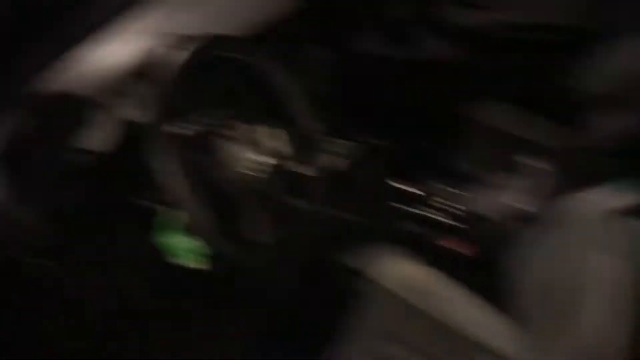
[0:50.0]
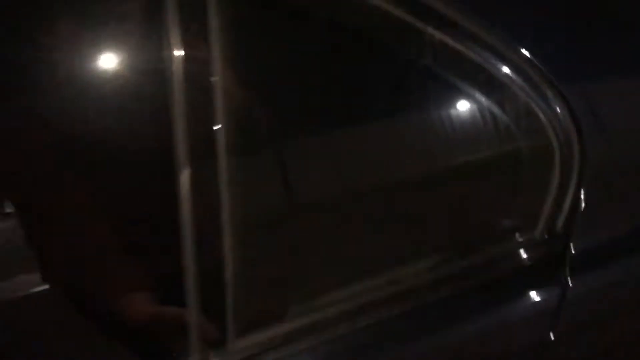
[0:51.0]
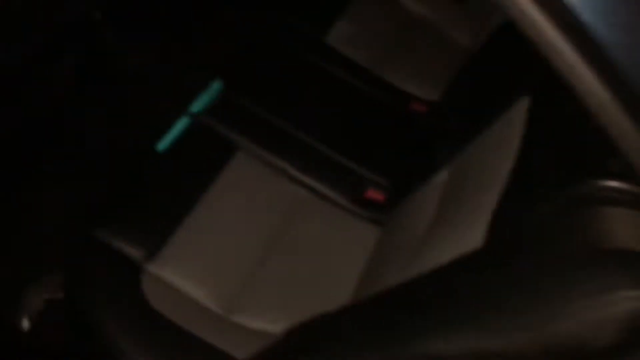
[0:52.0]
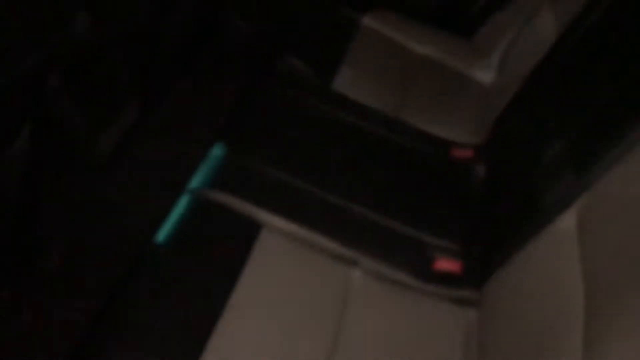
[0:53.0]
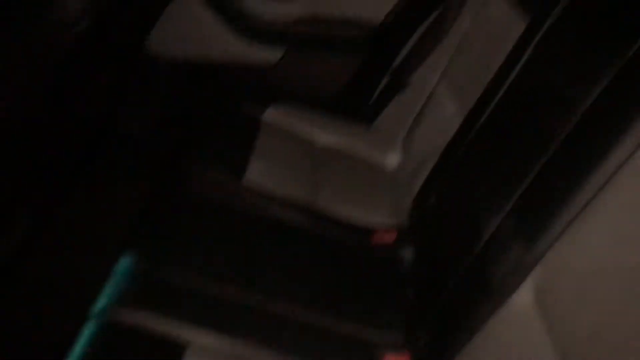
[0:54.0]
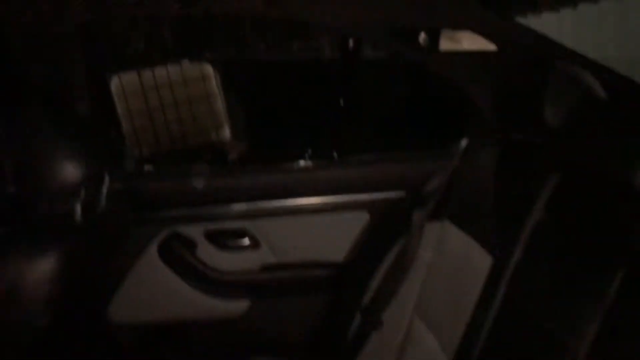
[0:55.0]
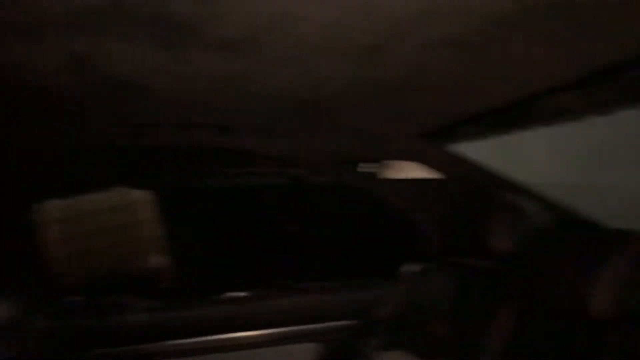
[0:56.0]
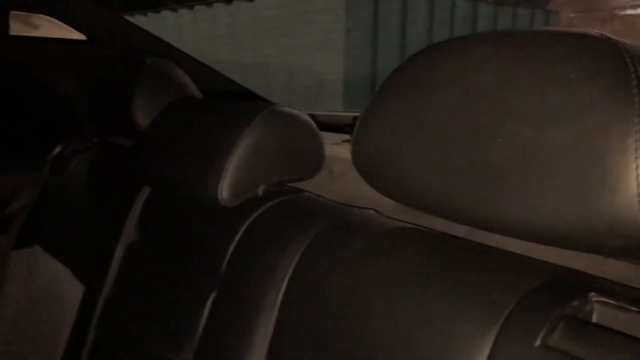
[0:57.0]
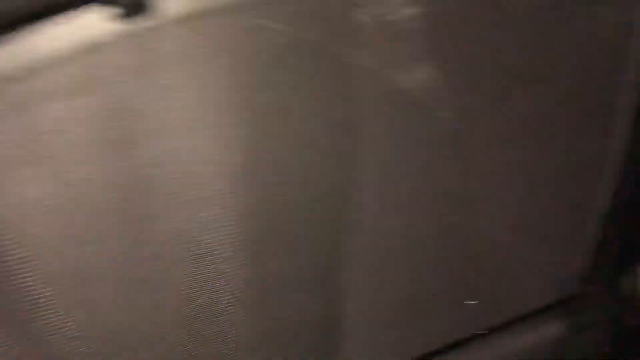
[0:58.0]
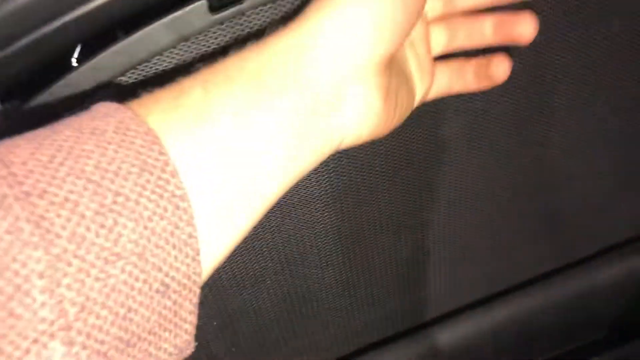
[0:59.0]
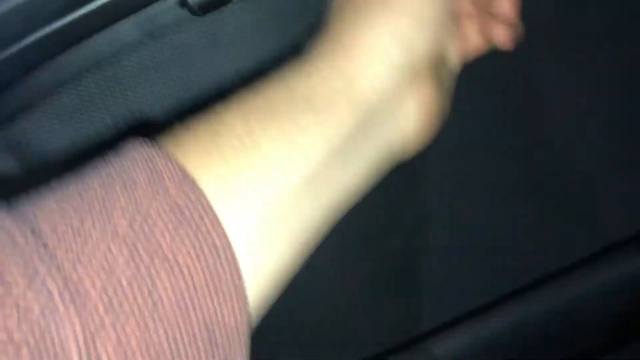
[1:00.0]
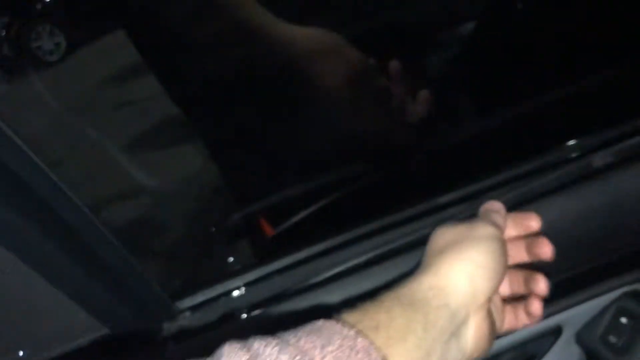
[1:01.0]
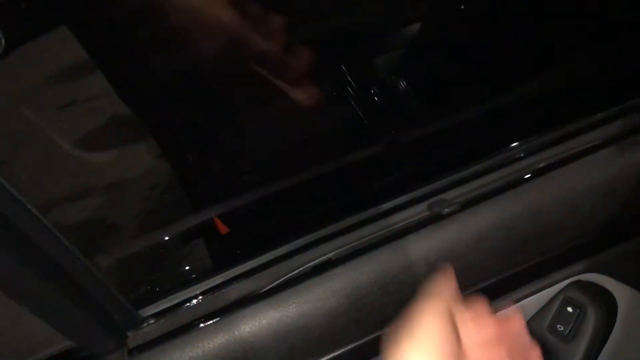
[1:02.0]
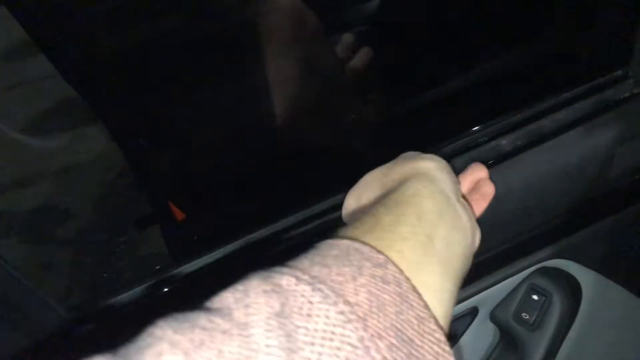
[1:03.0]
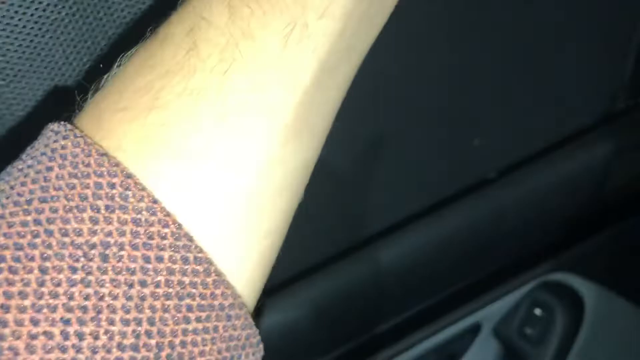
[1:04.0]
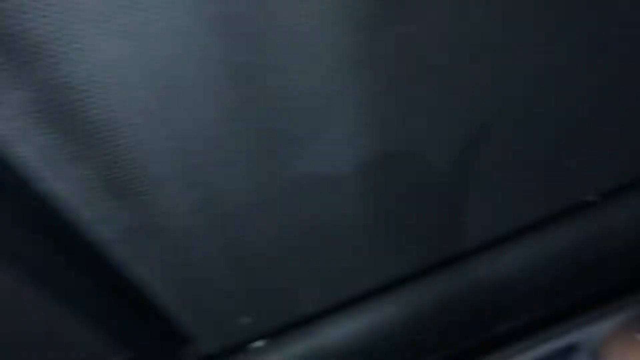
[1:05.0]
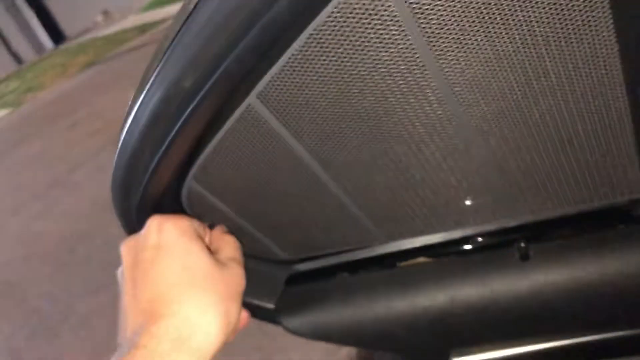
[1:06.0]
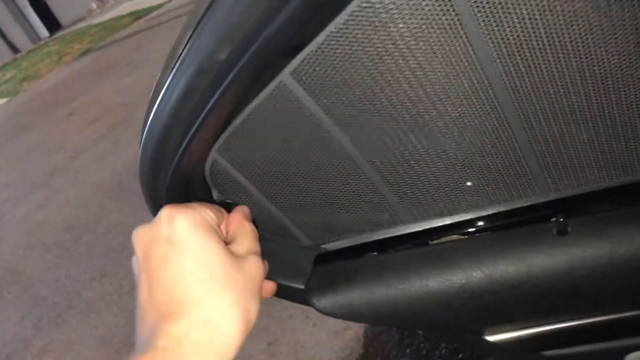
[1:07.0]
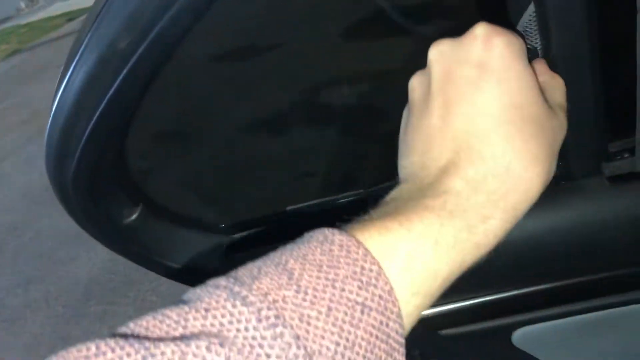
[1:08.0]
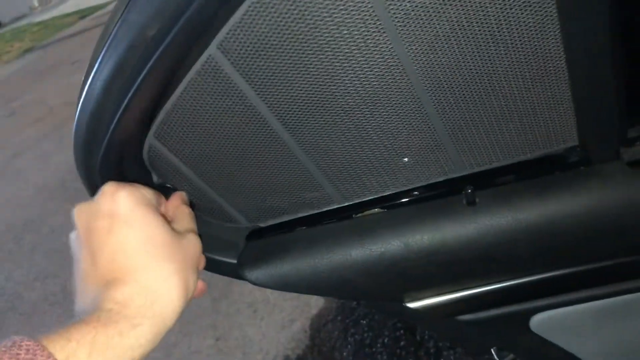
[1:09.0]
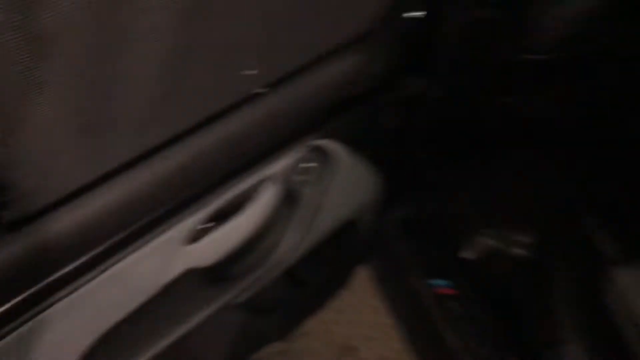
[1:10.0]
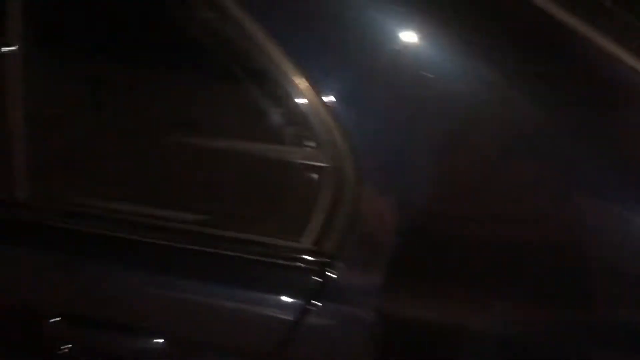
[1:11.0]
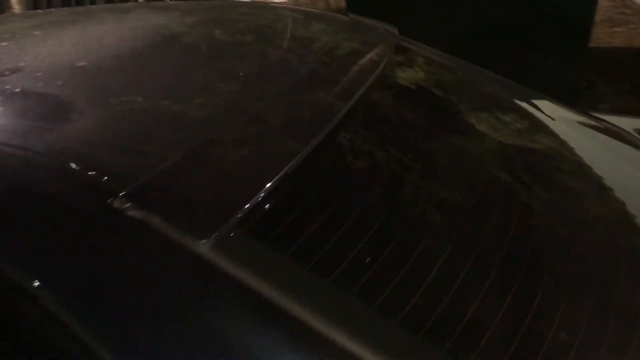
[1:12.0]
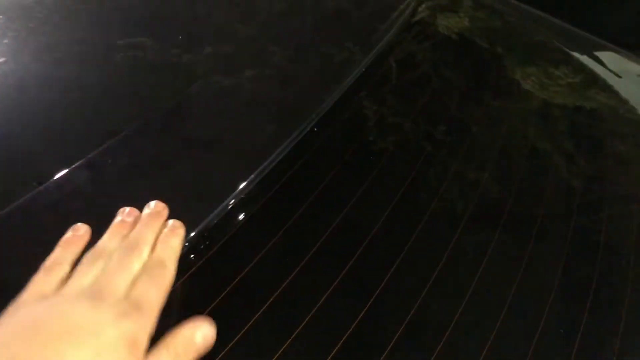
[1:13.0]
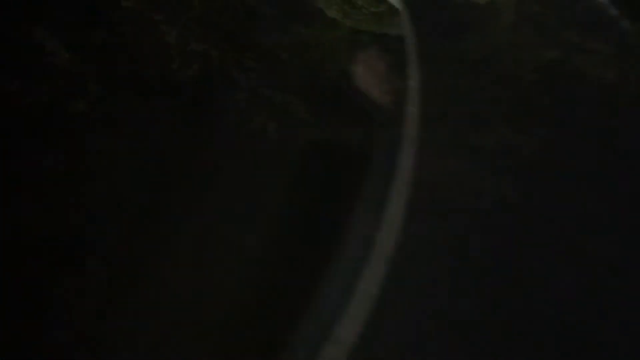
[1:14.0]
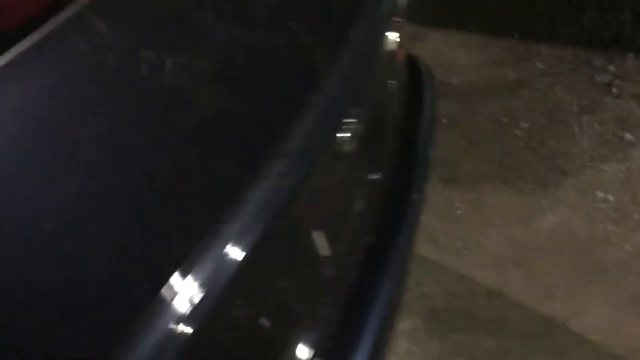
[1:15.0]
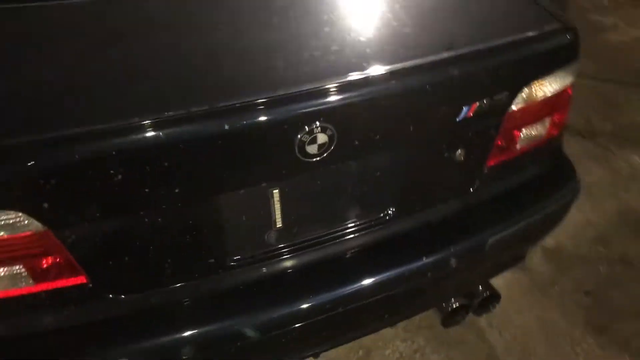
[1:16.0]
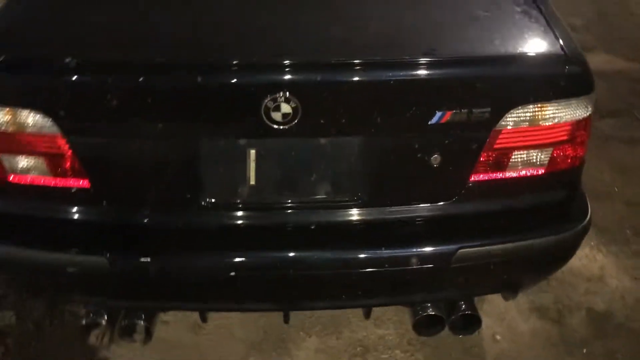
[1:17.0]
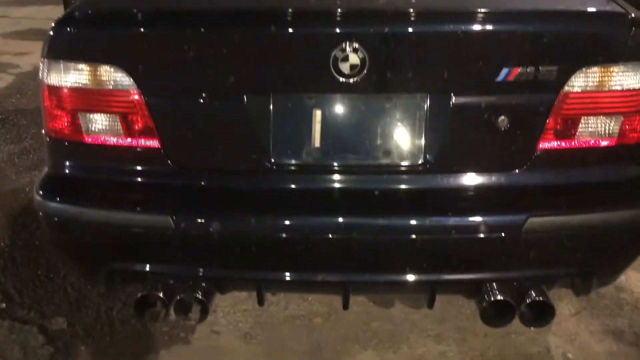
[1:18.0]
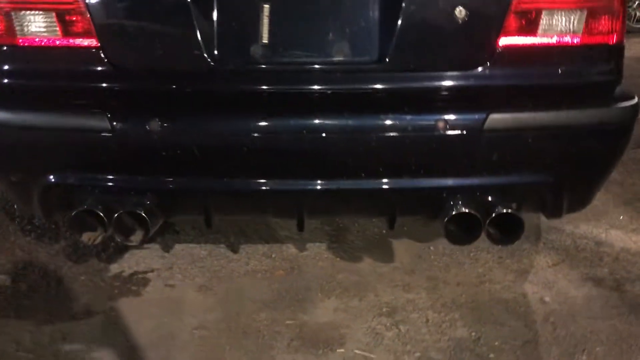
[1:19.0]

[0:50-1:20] The rear passenger door behind the driver's side is opened, revealing a two-tone rear seat with three seats in the rear. A sunshade made of black net is open; the person pulls it out and drops it on the ground. The small glass also has a sunshade, and the person shows its mechanism. A rear spoiler is mounted above the rear windscreen, and there is a small spoiler on the rear trunk. The rear view shows that the vehicle is a BMW, with a BMW logo and a blue and red M Sport logo. Quad pipes protrude from the rear diffuser.